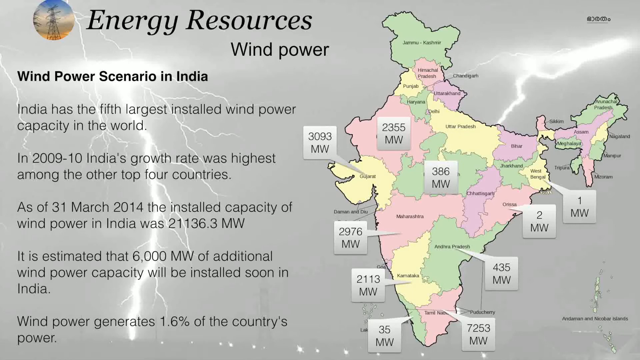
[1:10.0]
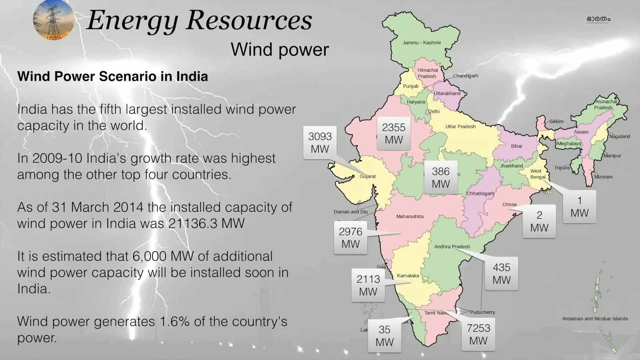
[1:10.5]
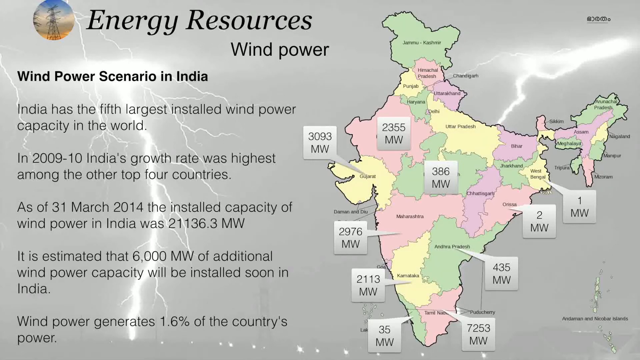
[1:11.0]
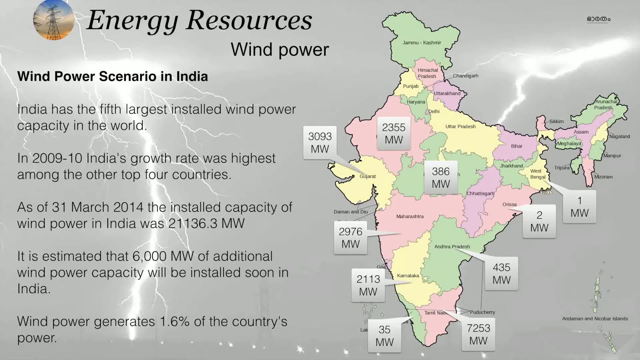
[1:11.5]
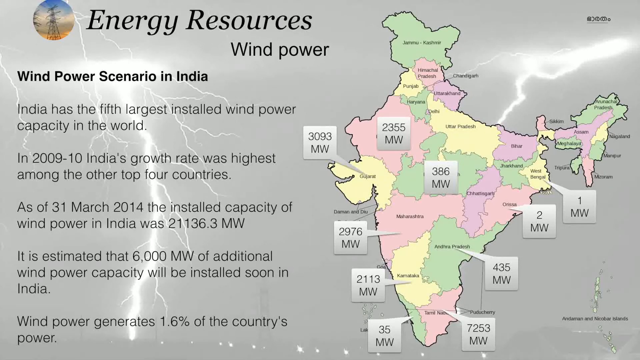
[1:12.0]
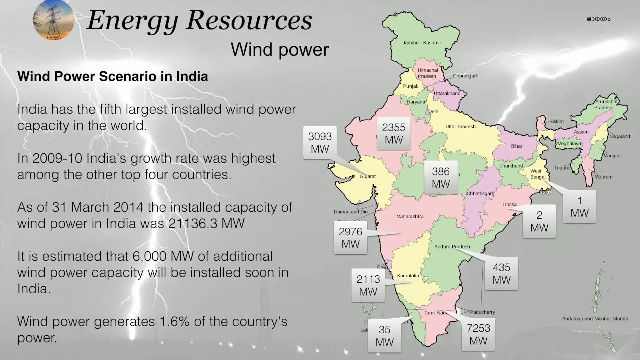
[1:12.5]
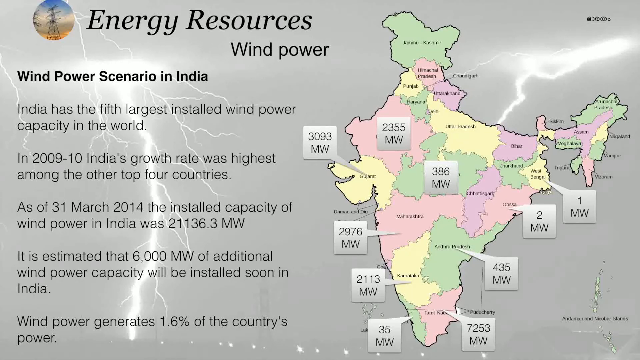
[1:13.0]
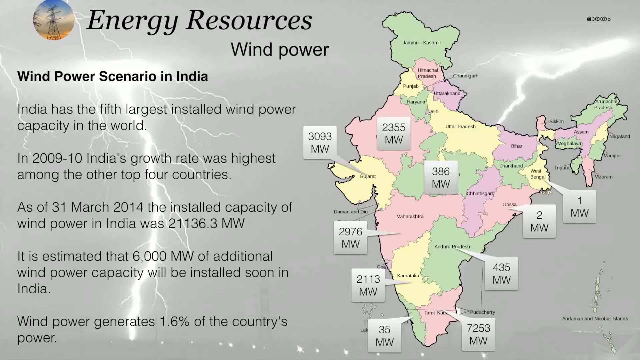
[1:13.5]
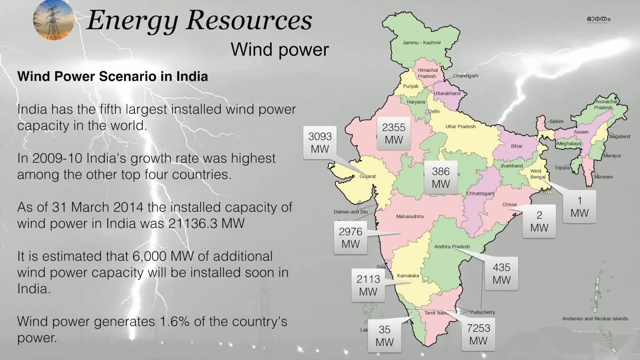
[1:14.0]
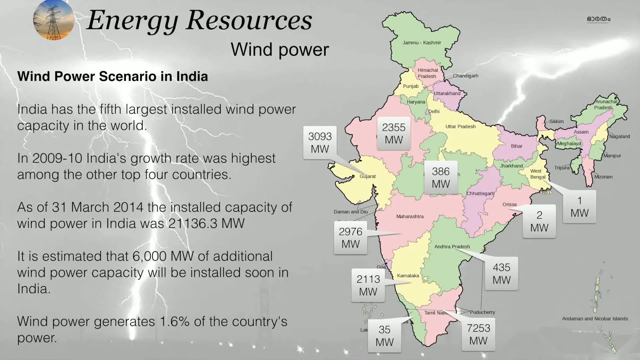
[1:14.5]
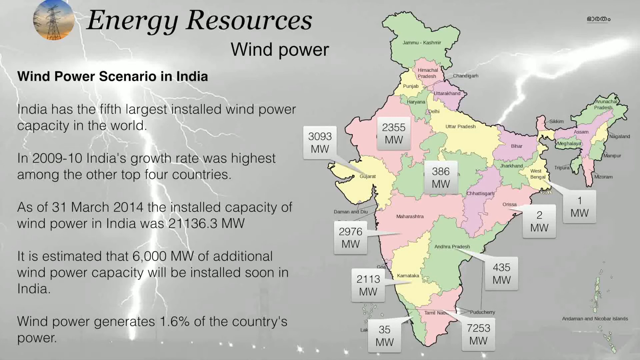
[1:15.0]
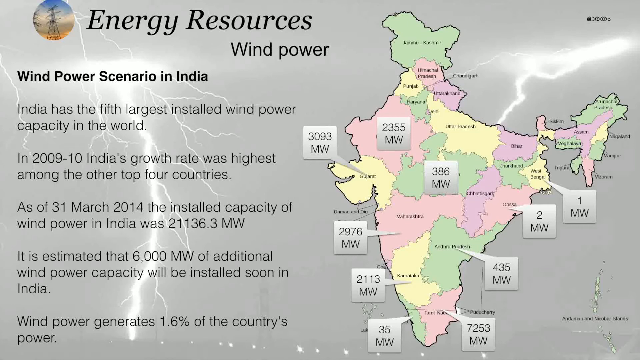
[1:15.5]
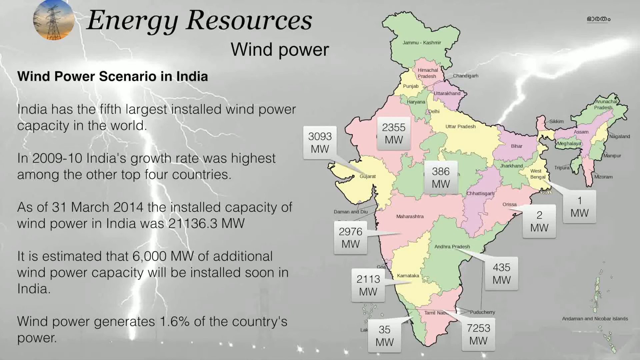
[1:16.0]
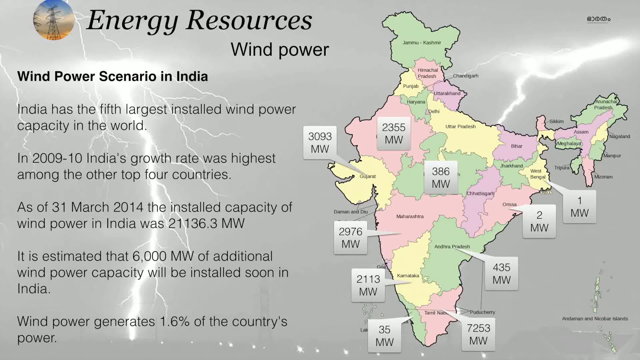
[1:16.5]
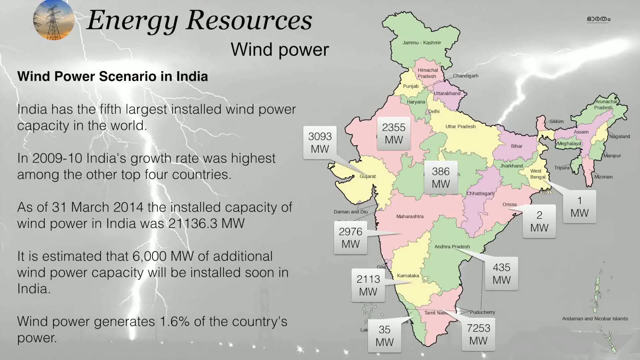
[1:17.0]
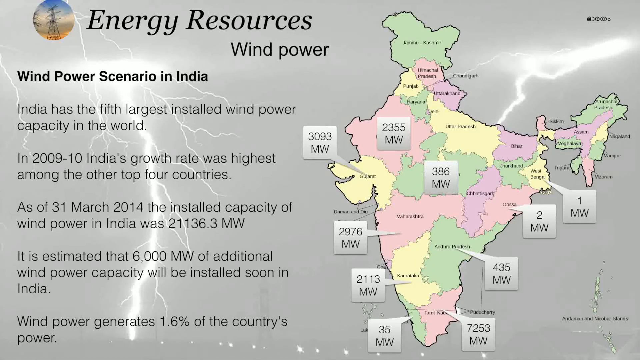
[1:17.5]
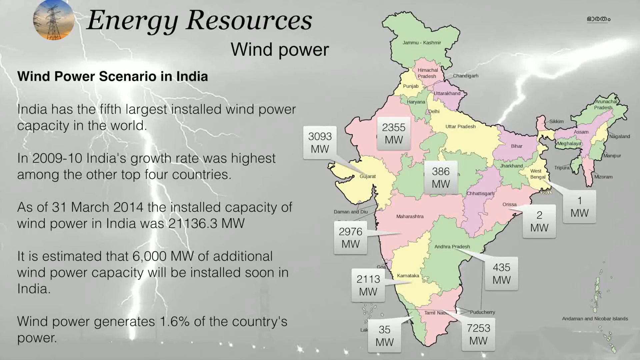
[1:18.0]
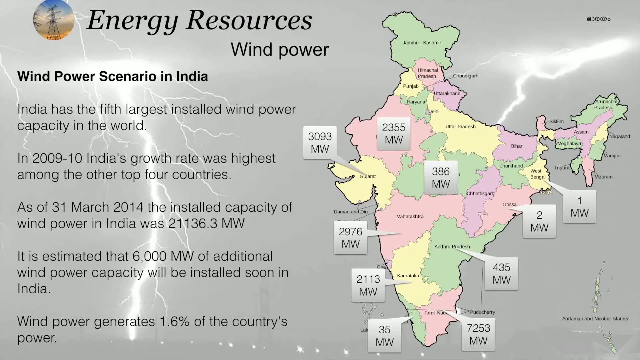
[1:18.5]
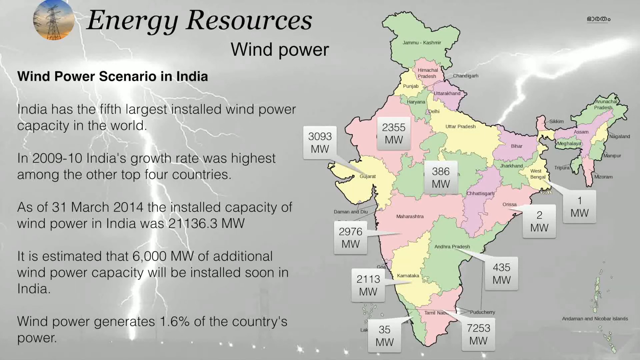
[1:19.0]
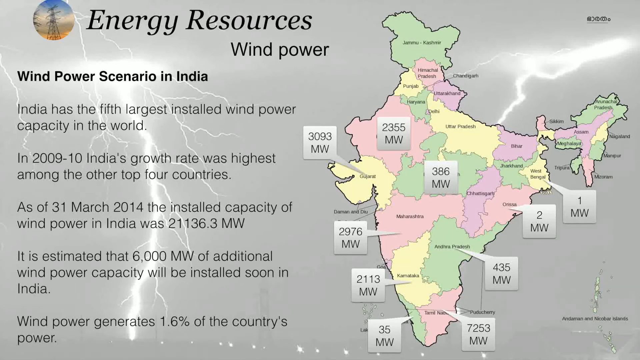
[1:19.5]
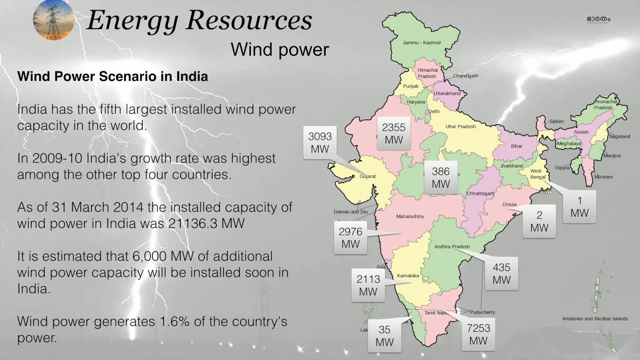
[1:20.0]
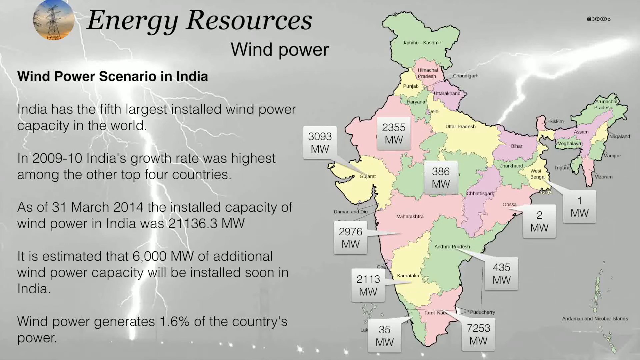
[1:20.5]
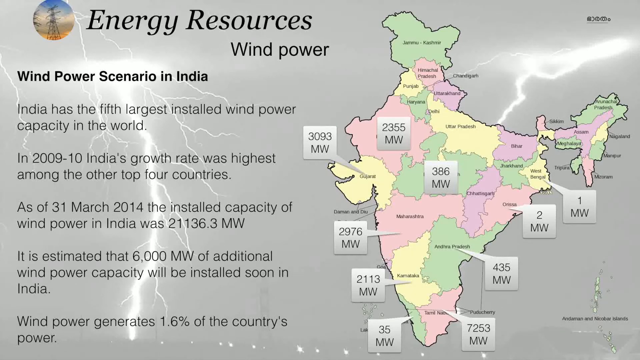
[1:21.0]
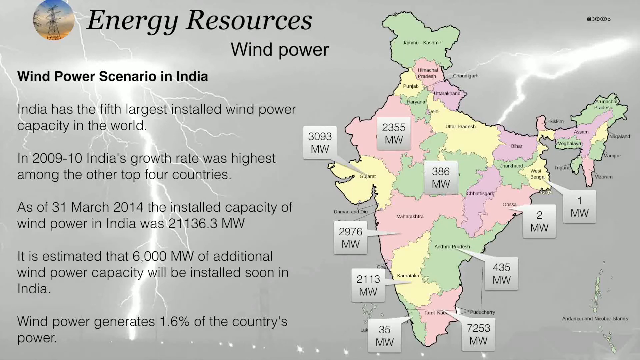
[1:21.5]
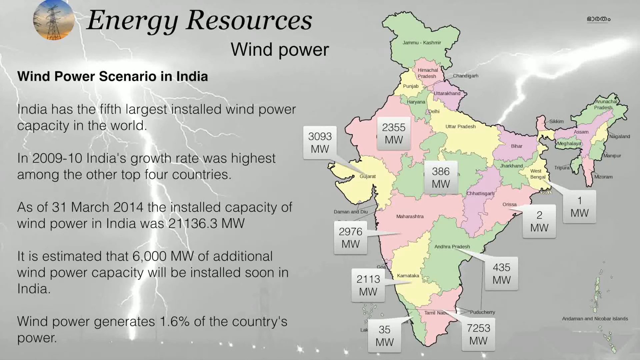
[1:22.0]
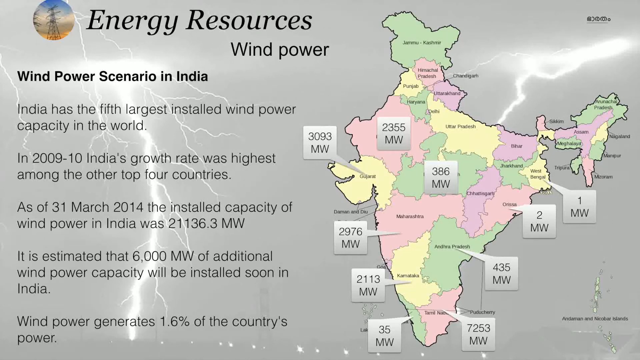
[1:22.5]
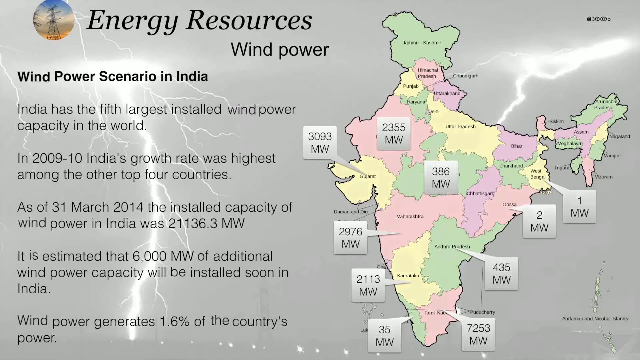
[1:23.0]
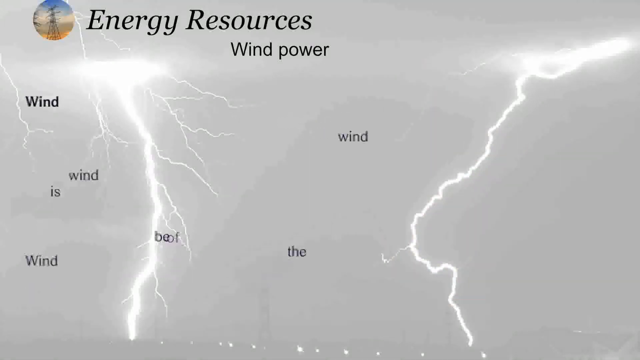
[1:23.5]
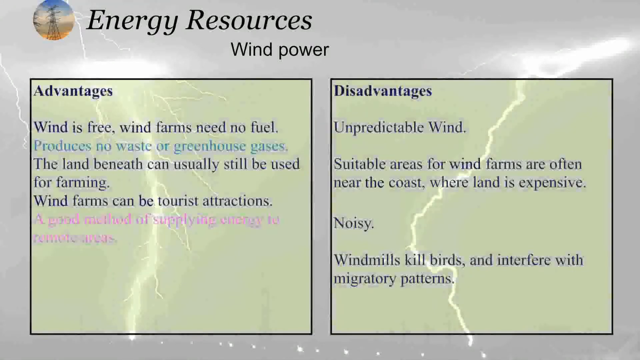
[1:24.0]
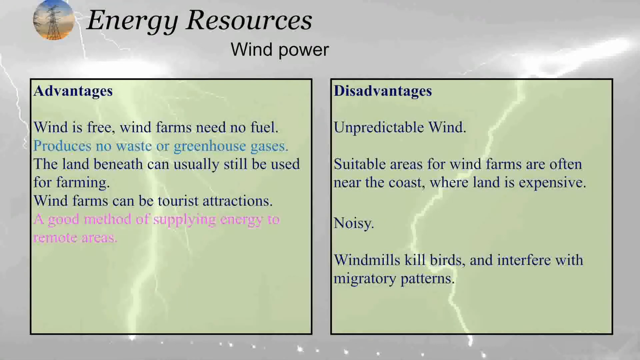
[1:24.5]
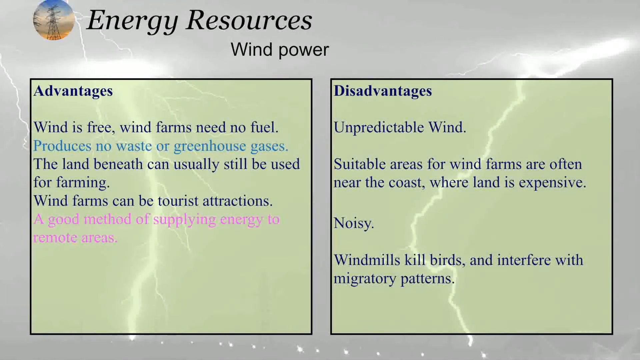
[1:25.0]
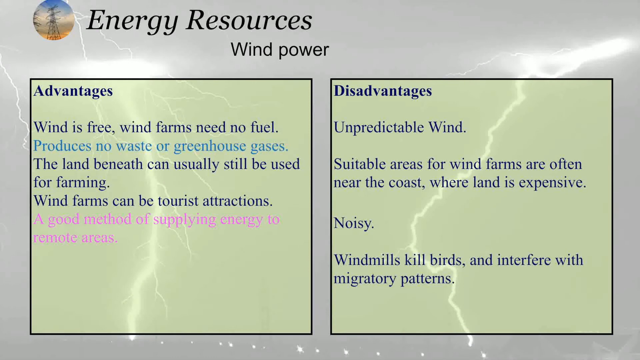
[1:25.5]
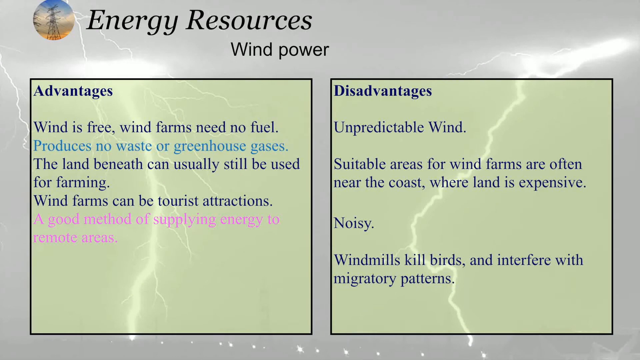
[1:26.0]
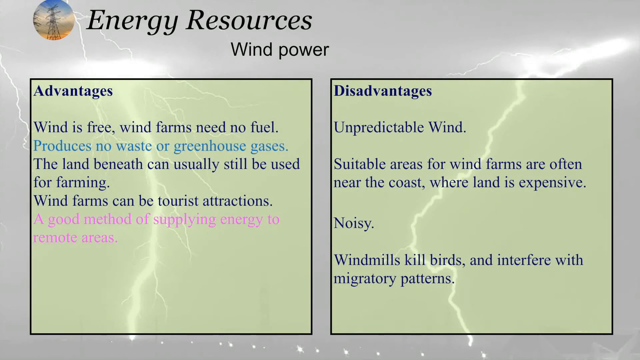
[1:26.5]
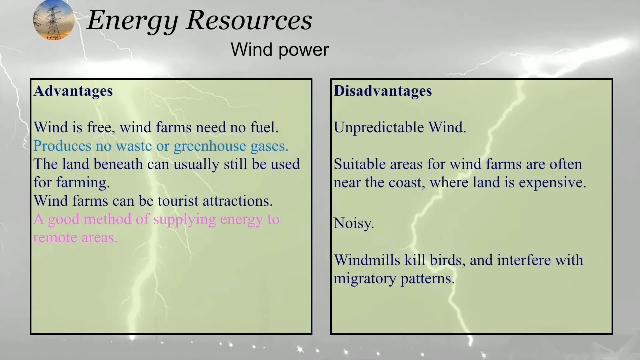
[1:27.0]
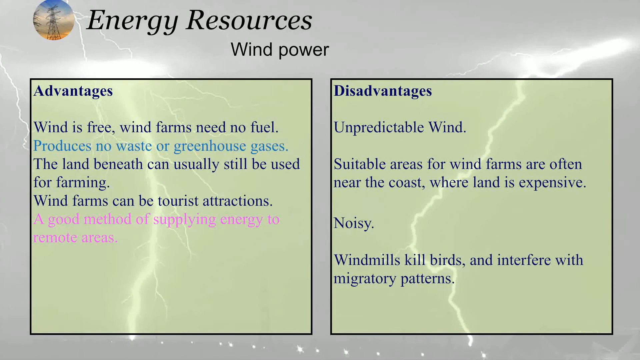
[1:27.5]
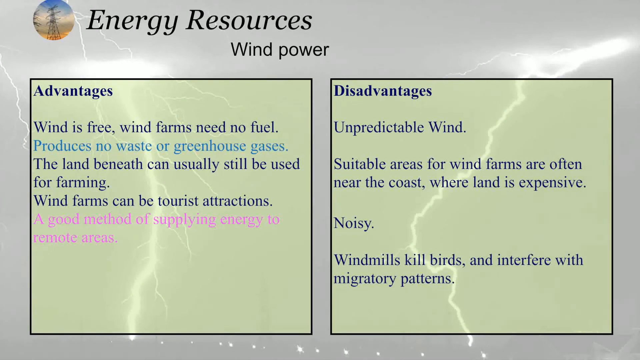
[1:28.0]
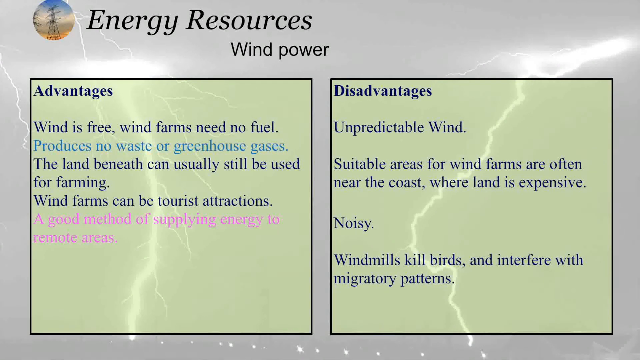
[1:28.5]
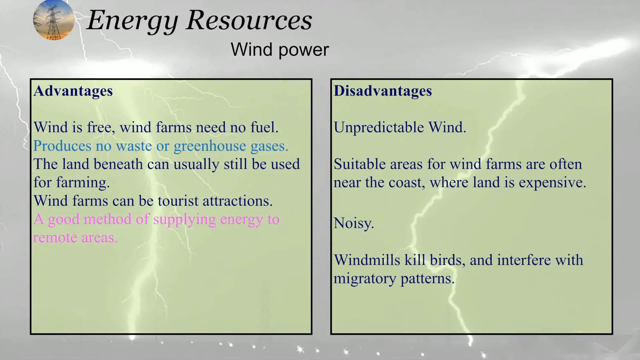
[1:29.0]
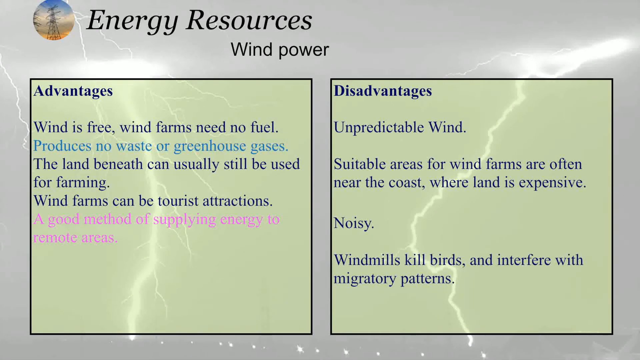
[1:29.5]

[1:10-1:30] The map of India is on the right, and on the left "wind power scenario in India" has five separated lines of information underneath. The slide then changes to a square on the left and a square on the right, each with a black border and a green background. "Energy resources" is still at the top with "wind power" under it. The left square is titled "advantages" and lists in black: "wind is free, wind farms need no fuel," "produces no waste or greenhouse gases," "the land beneath can usually still be used for farming," and "wind farms can be tourist attractions." Then in pink it says "a good method of supplying energy to remote areas." The right square is titled "disadvantages," all in black: "unpredictable wind," "suitable areas for wind farms are often near the coast where land is expensive," "noisy," and "windmills kill birds and interfere with migratory patterns." The background is still the gray sky with lightning striking down.